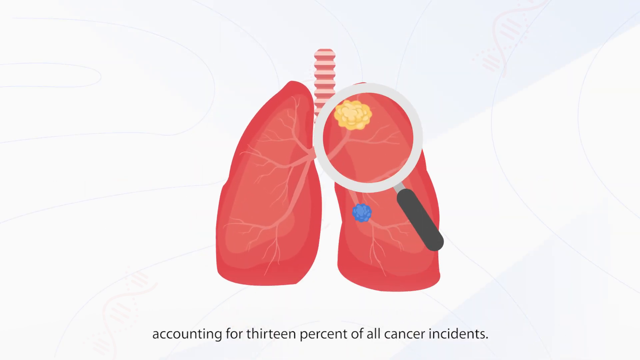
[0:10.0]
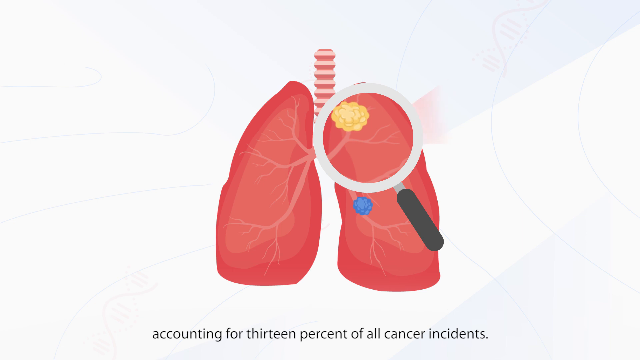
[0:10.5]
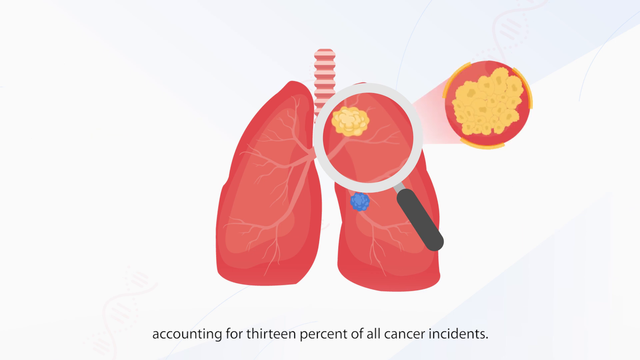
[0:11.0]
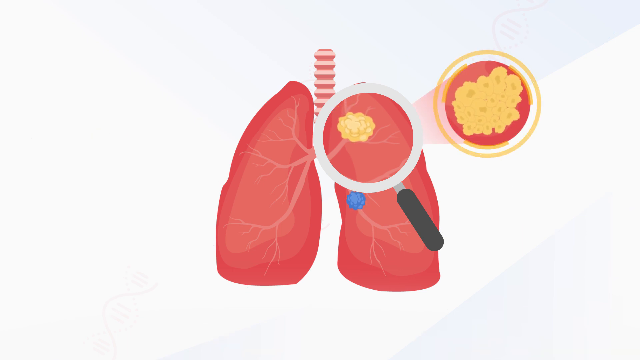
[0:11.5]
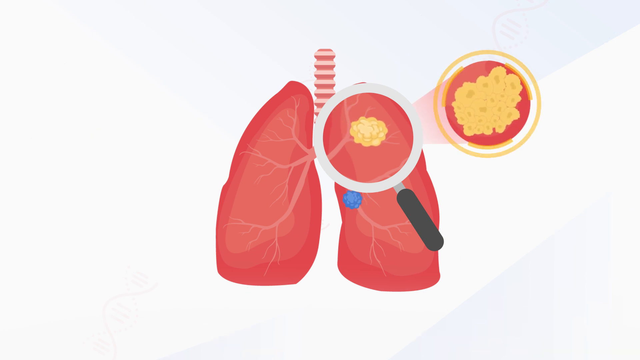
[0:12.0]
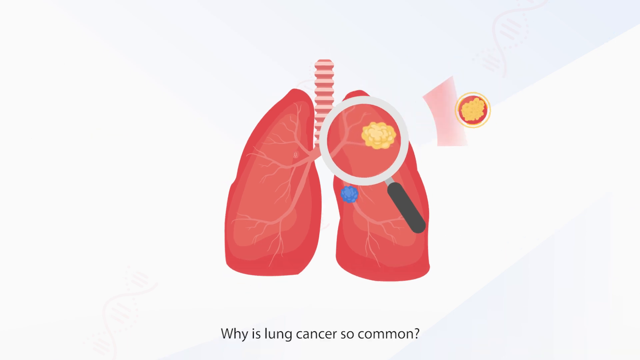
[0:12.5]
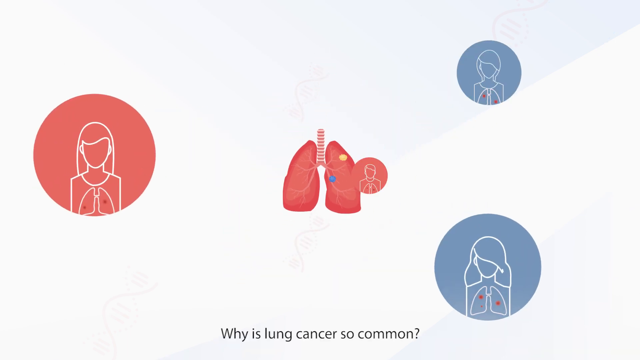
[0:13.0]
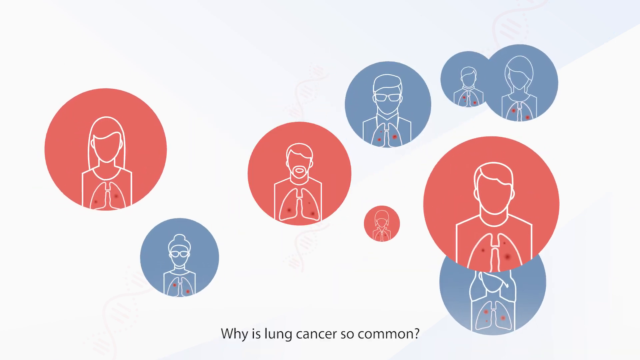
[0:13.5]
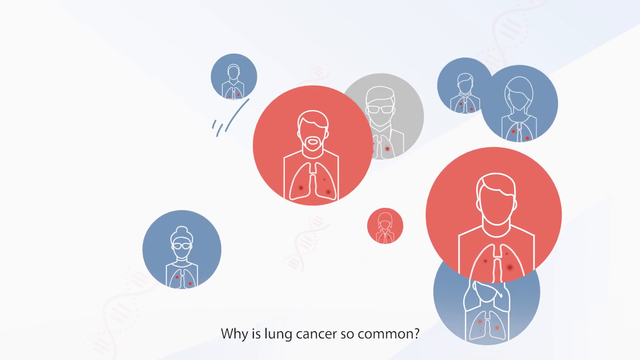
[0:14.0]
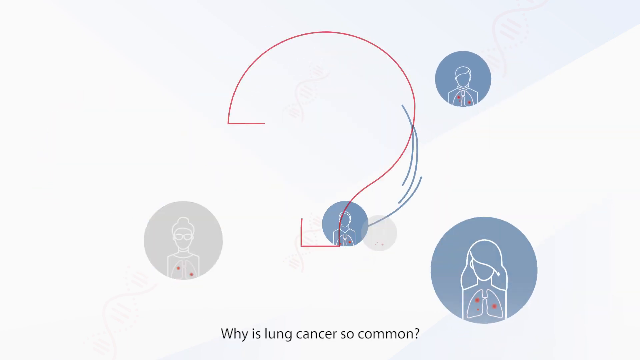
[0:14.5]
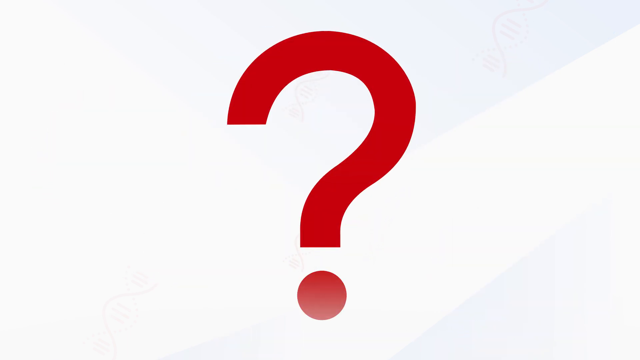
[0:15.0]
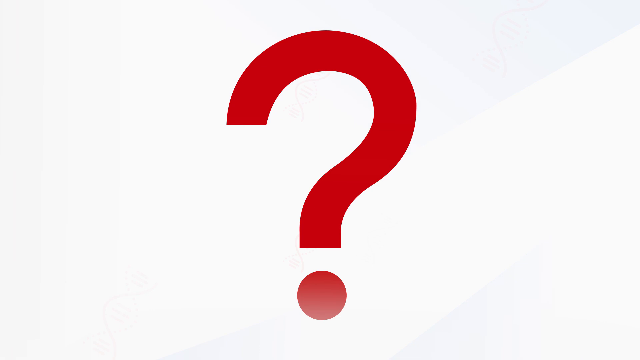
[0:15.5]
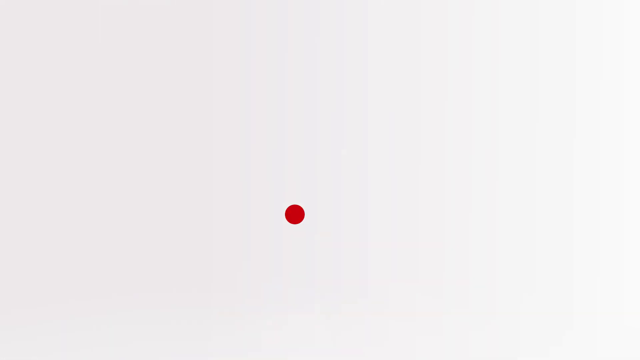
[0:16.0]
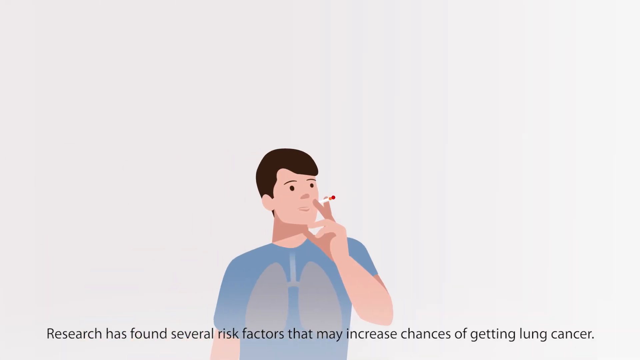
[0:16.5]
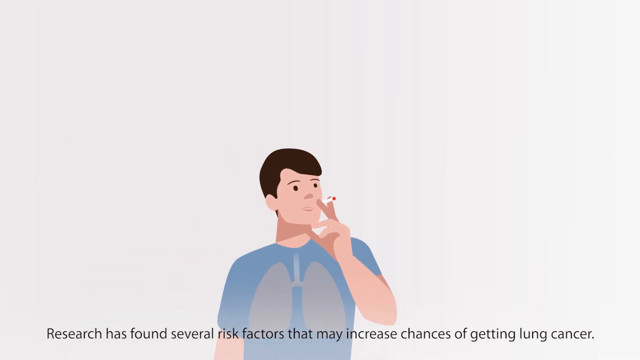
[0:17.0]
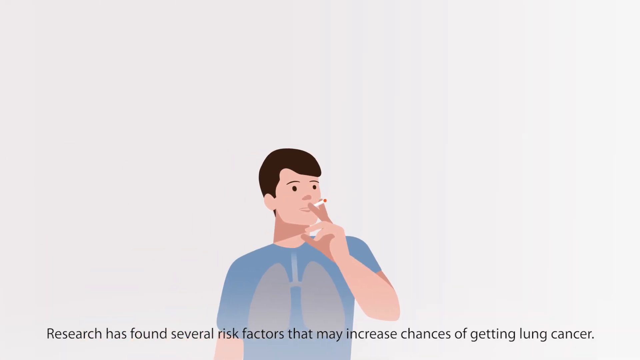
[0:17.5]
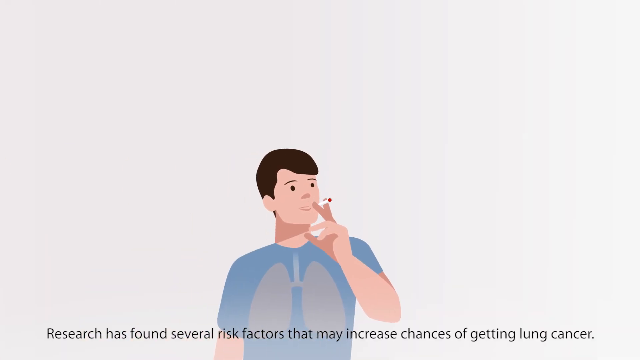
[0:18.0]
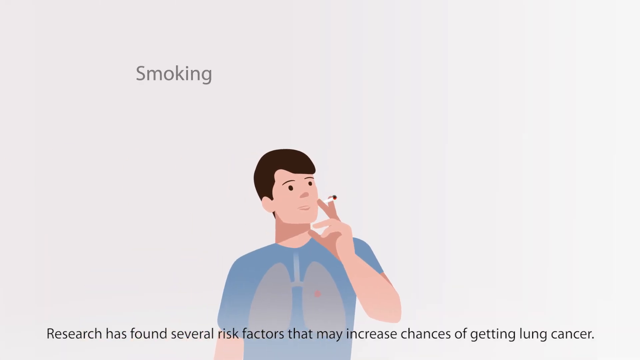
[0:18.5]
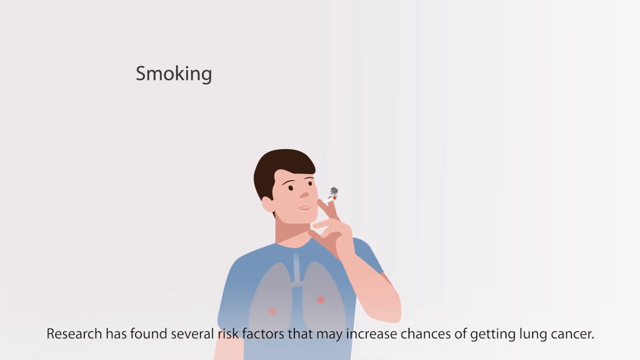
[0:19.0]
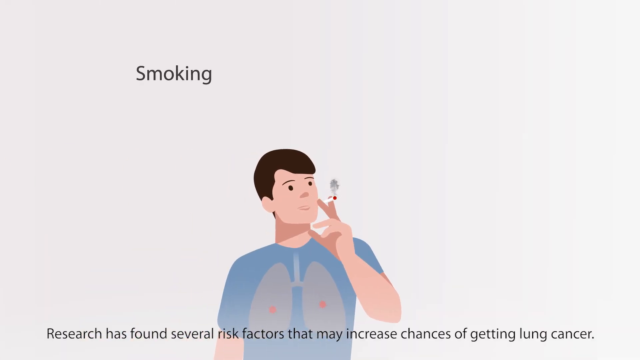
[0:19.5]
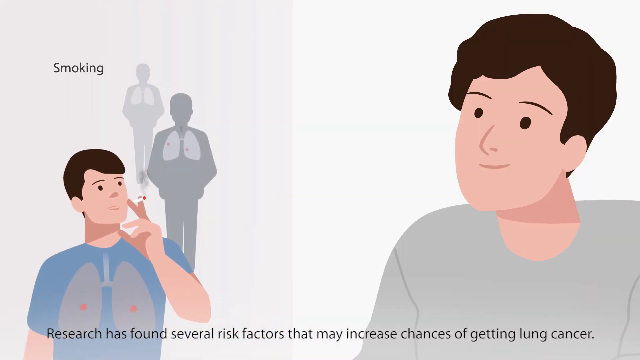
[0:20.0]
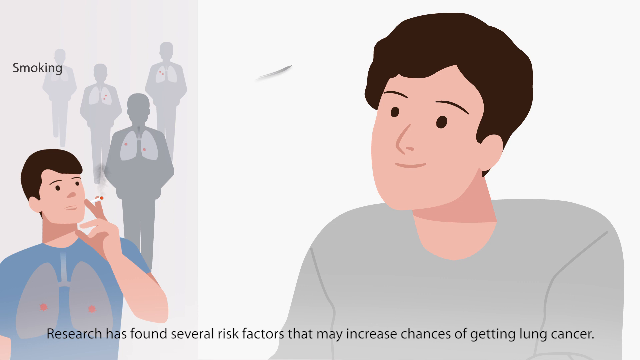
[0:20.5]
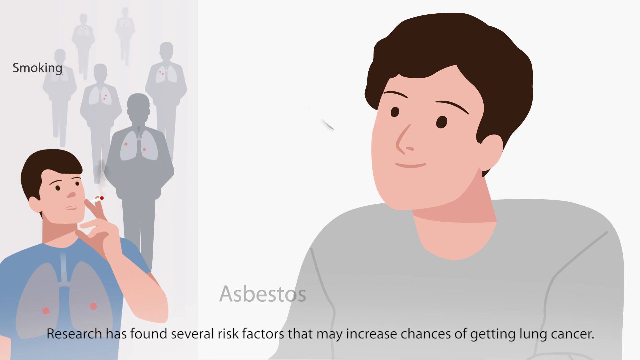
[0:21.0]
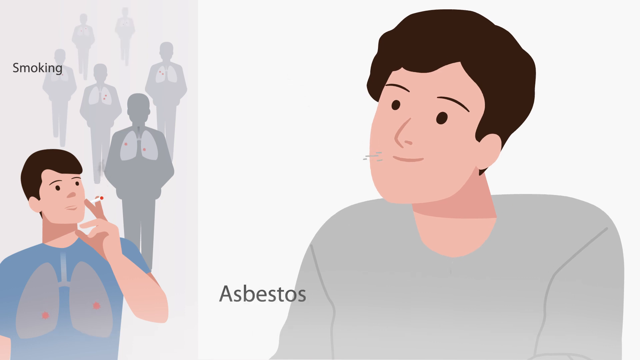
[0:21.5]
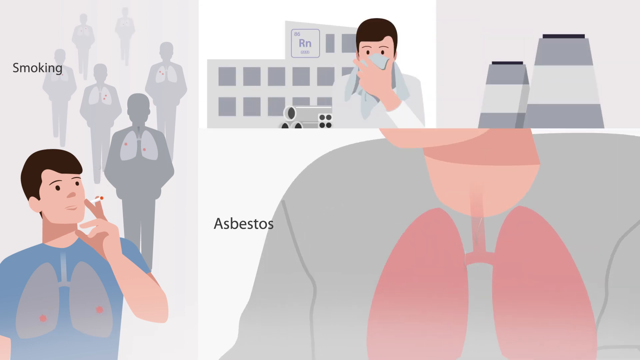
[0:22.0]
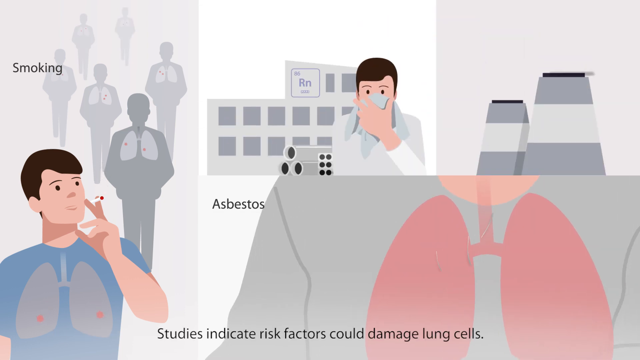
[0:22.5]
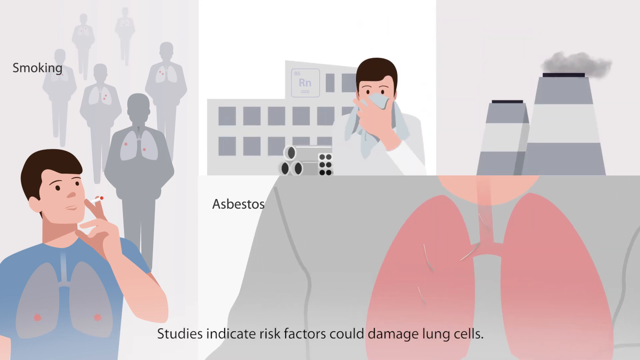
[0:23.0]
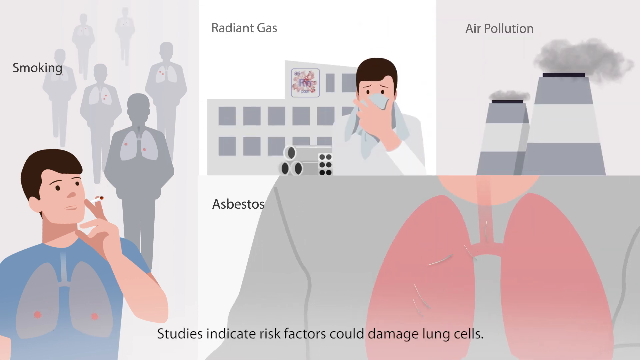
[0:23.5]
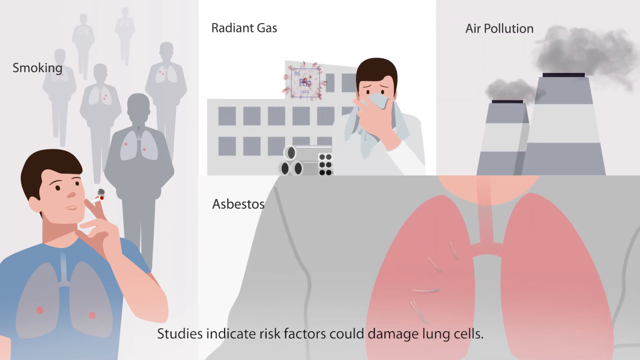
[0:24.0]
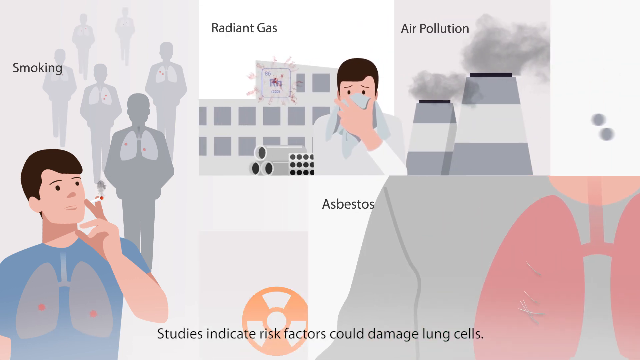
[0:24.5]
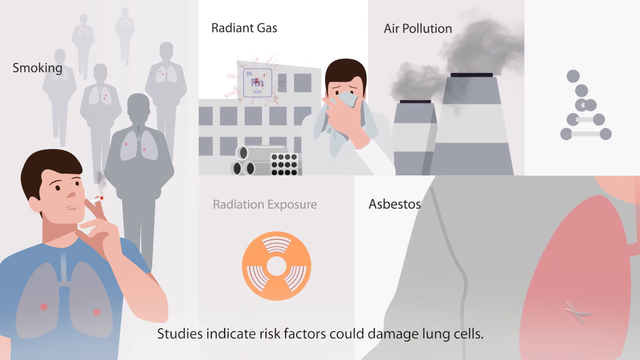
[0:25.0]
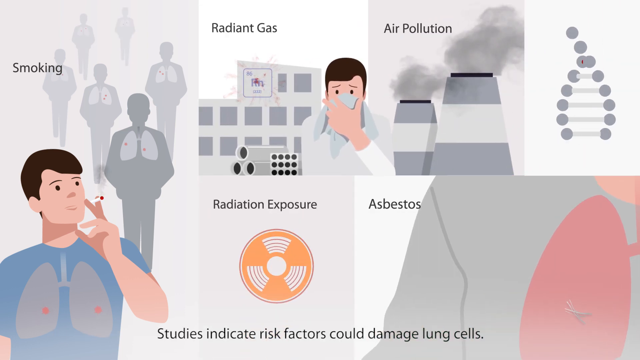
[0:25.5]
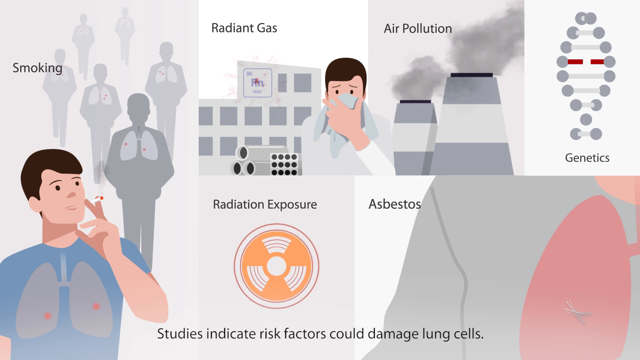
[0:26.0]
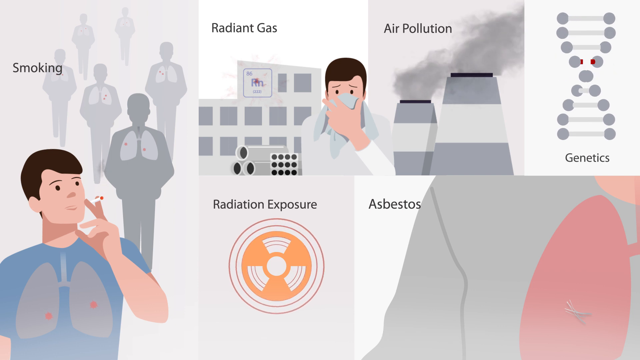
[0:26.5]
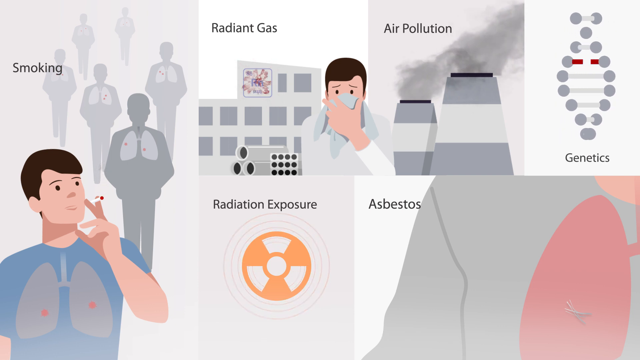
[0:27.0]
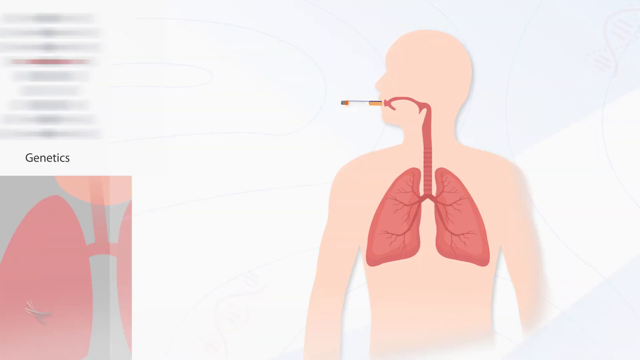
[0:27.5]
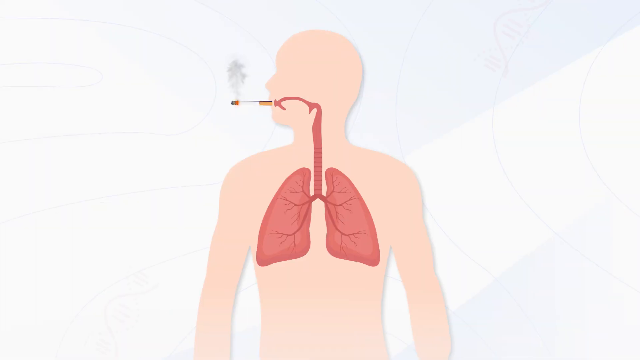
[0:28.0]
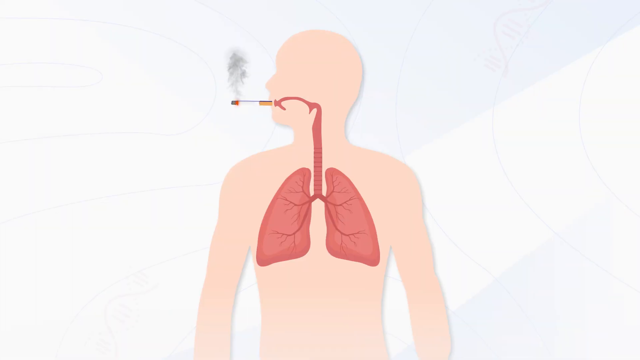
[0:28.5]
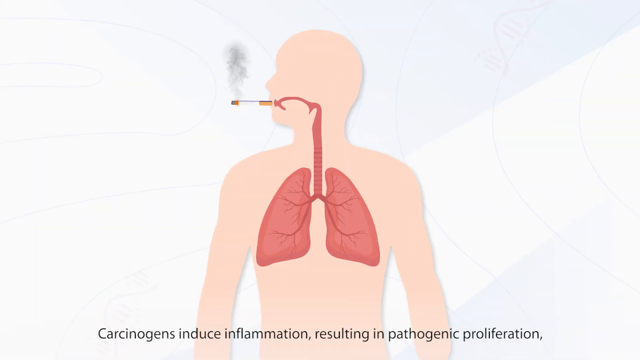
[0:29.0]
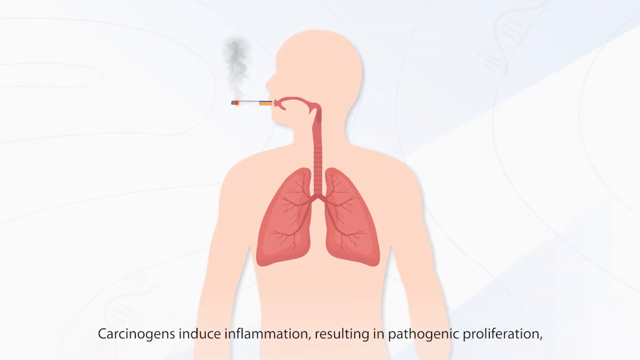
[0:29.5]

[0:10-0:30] The glass hovers over the lung and a bubble appears out of it showing a magnified image of a yellow cluster of carcinoma cells. The lungs zoom into the centre of the image, getting smaller and smaller, and multiple bubbles appear from them as the lungs disappear. The circular images are blue, red or gray; each has the outline of a human figure with spots showing where the carcinoma cells are in the lungs. These images combine into a large red question mark in the centre of the screen, which collapses into itself and turns into a small red ball. The ball gets smaller and bounces across to the centre of the image, where a man who is smoking appears from the left, sliding across. His lungs are animated, and the circle becomes the tip of the cigarette he smokes in his right hand, with smoke coming out behind him. Six shadowy figures appear: silhouettes of people with lung cancer, with animated lungs containing a few carcinogenic cells. This image squishes into a rectangle on the left side. To the right, a close-up cartoon image of a man from the shoulders up appears; his lungs are visible, he has a concerned look on his face, and he looks to the left. The text "asbestos" appears. The image collapses in half and is replaced by two squares. The left square shows a man in a factory holding a face mask over his face, with steel pipes behind him. The right square shows two large chimneys, with smoke pouring from the right-most chimney and then from the left-most one. The text "radiant gas, air pollution" appears. Another square appears from the right, reading "genetics", with an image of DNA whose genetic code is broken on the fourth strand down. The image below the radiant gas square splits into two, and an orange radiation logo appears with the term "radiation exposure". The images stay on screen for a few seconds before switching.